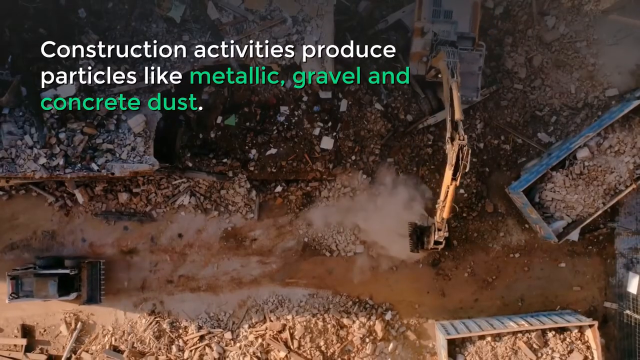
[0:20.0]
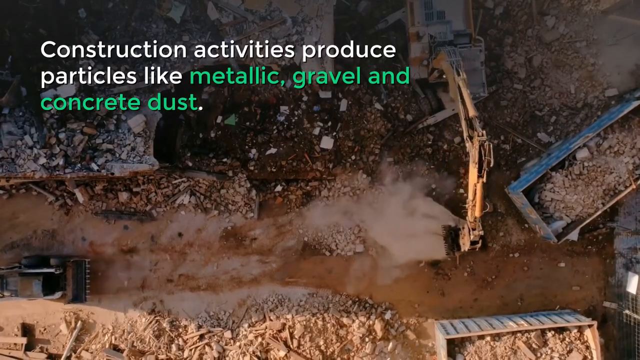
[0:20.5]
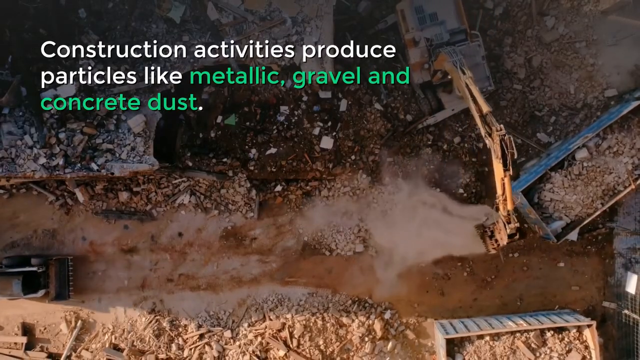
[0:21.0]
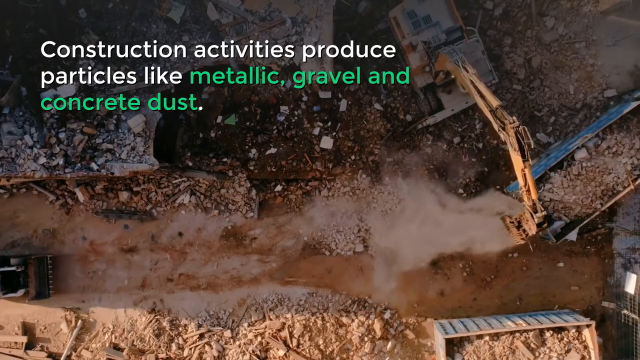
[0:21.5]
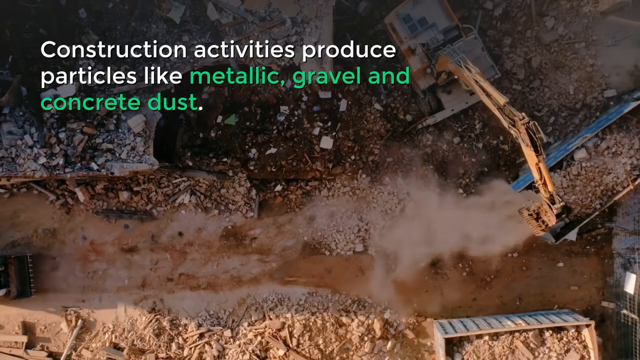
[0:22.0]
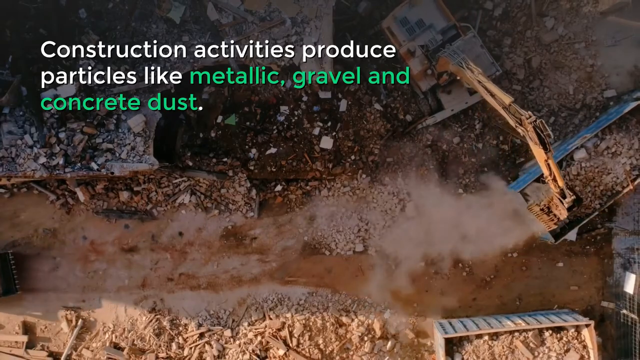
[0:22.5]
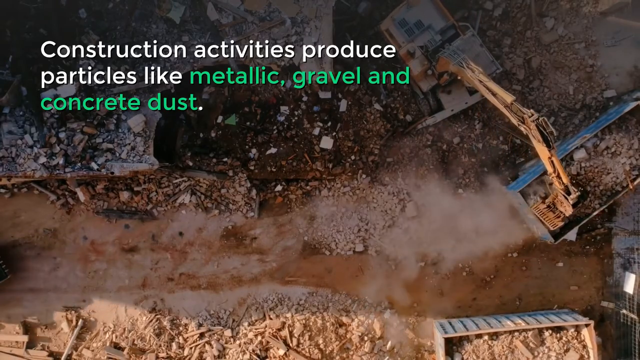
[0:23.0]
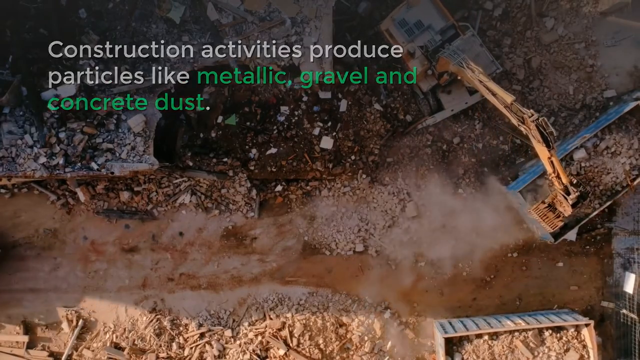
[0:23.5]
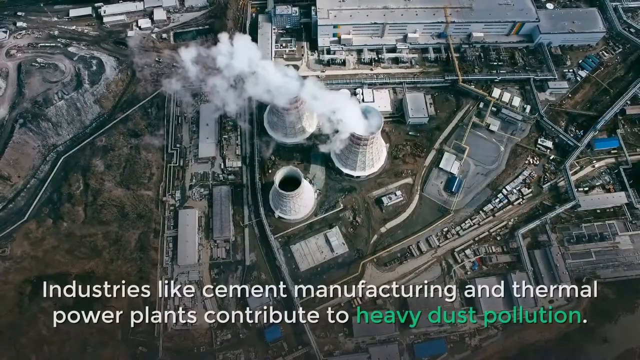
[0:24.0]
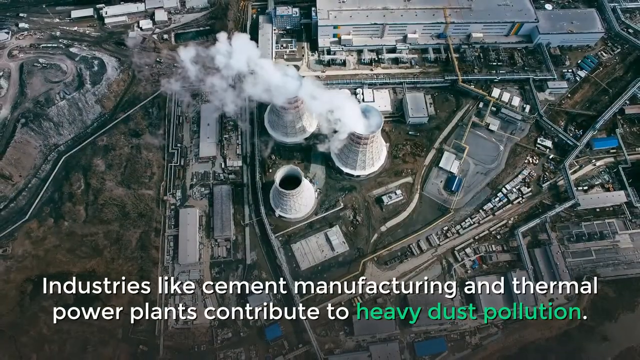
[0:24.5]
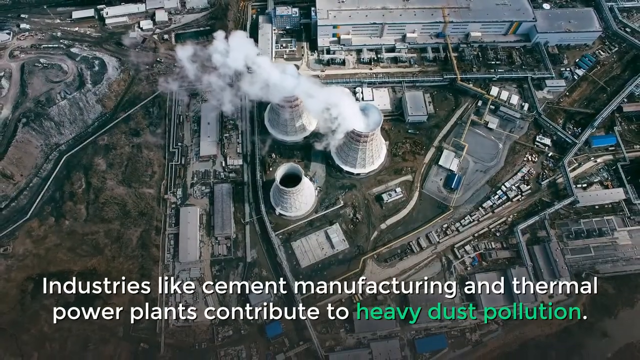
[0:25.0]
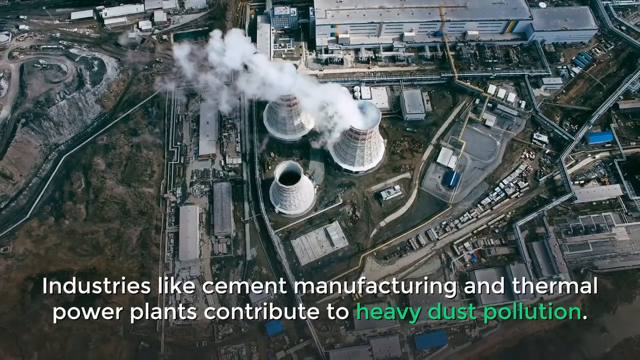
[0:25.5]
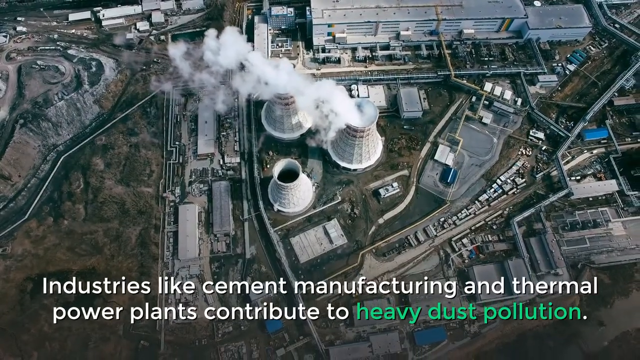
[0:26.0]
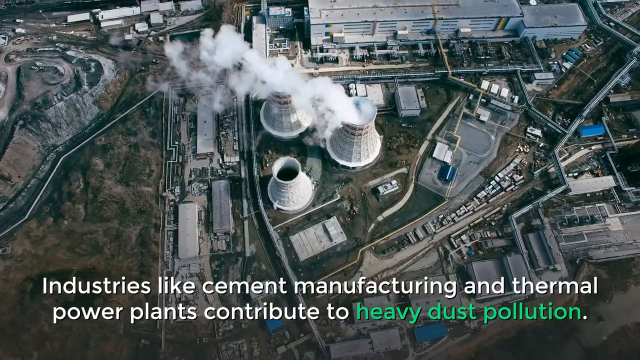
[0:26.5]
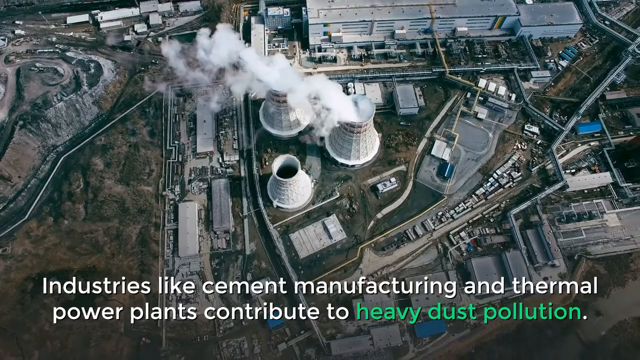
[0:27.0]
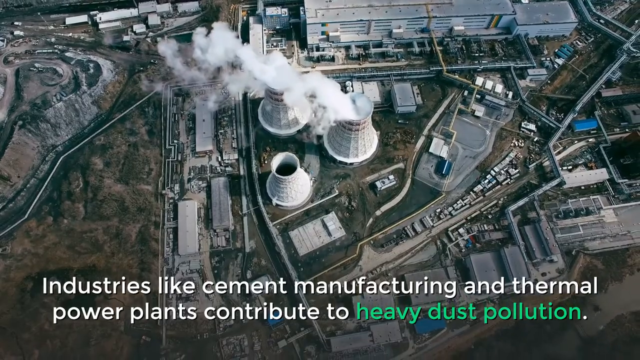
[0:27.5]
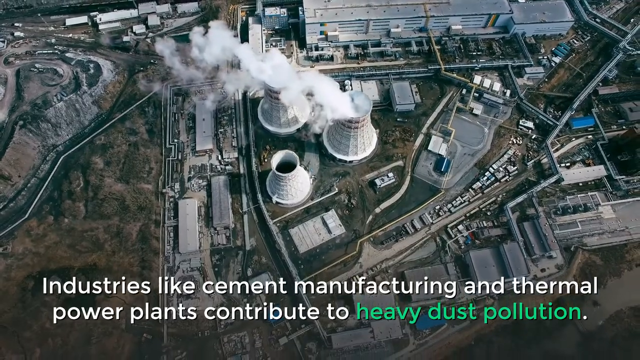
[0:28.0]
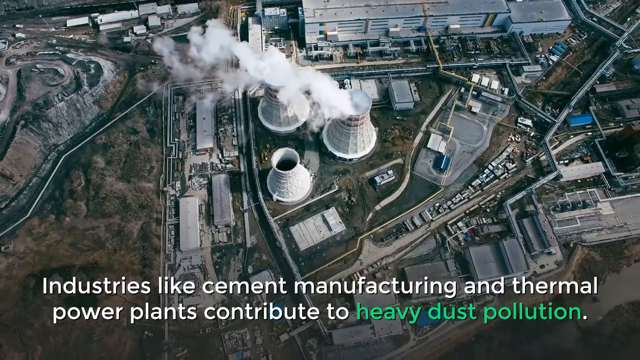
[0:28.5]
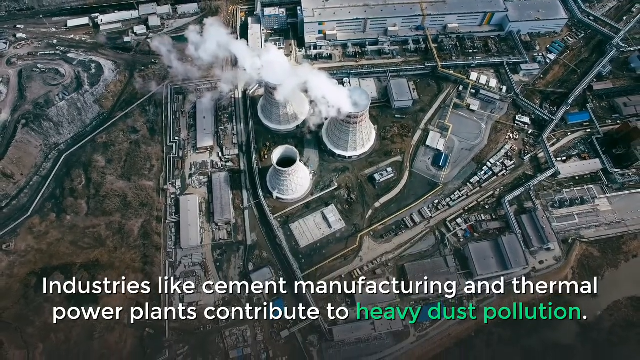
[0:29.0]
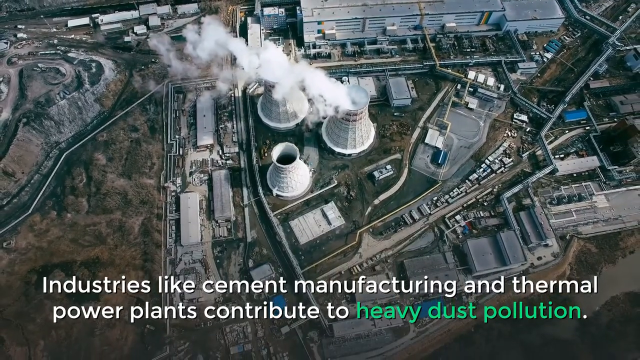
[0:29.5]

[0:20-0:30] A bird's-eye-view shot of a construction site shows a backhoe scooping up some material, the back of a dump truck, and a bulldozer in the lower left-hand corner, all in motion. A title on screen reads "construction activities produce particles like metallic, gravel, and concrete dust". The shot ends and a bird's-eye view of what looks like a nuclear power plant follows, drifting slowly over it, with a lower third at the bottom of the screen reading 'industries like cement manufacturing and thermal power plants contribute to heavy dust pollution'. The video then cuts quickly to a man in a hard hat and mask.